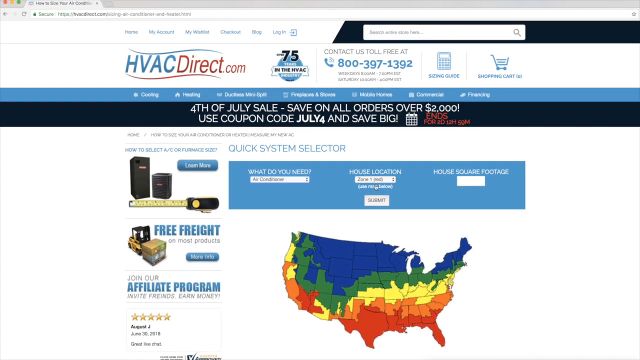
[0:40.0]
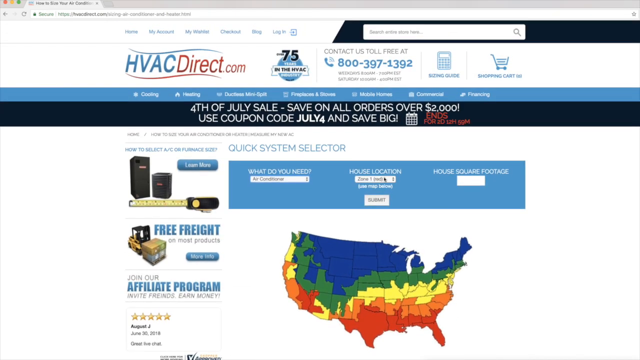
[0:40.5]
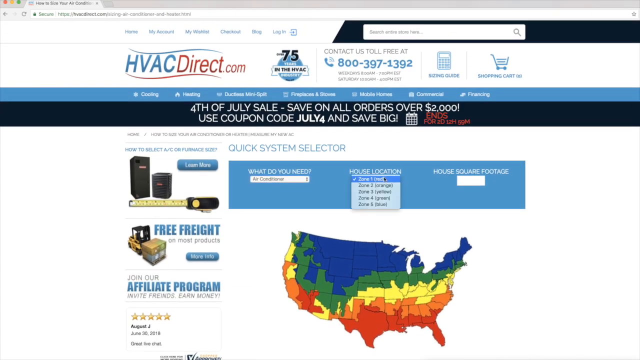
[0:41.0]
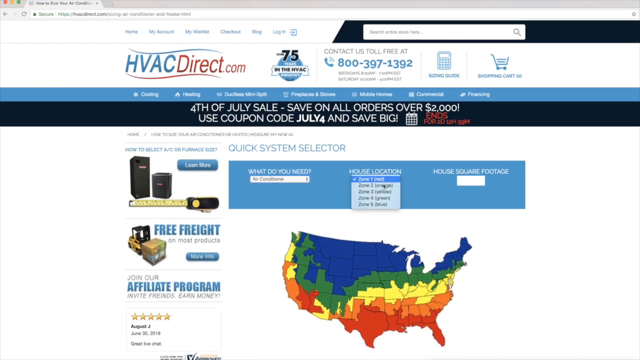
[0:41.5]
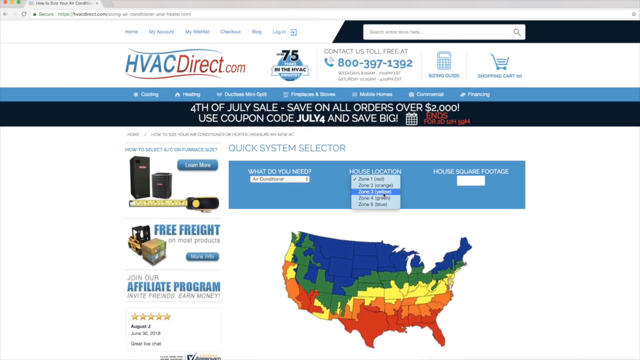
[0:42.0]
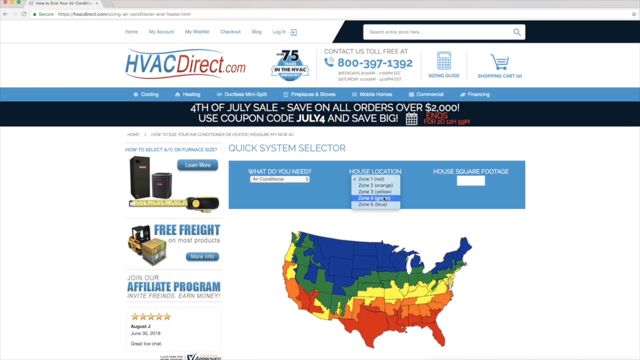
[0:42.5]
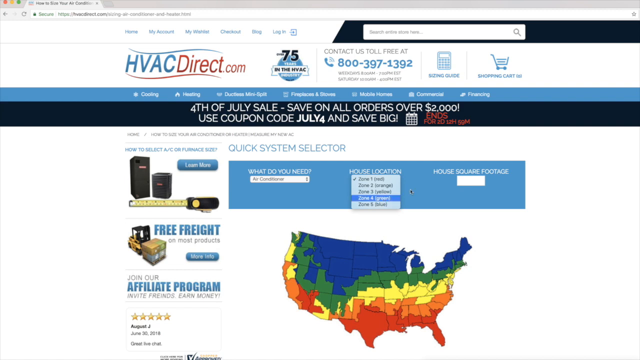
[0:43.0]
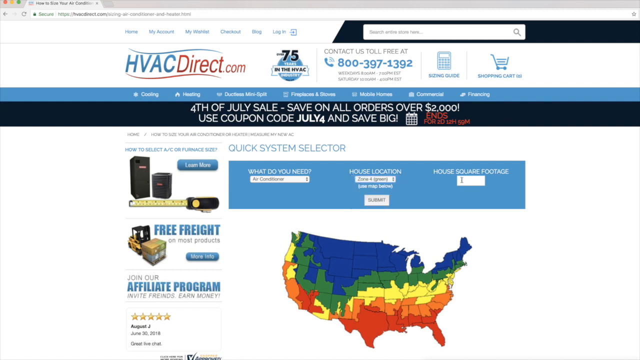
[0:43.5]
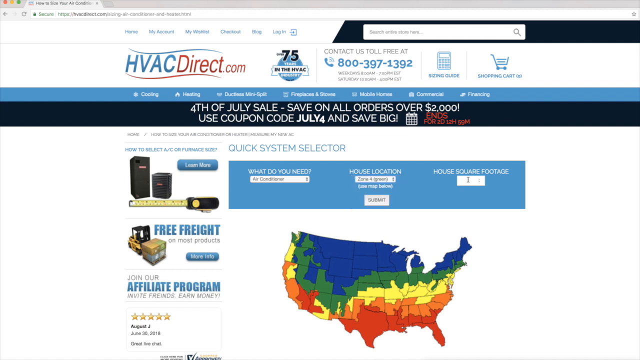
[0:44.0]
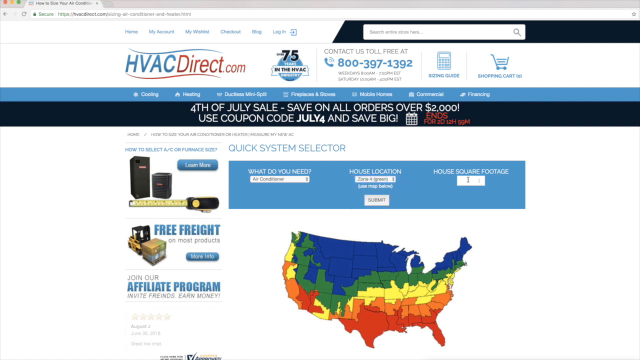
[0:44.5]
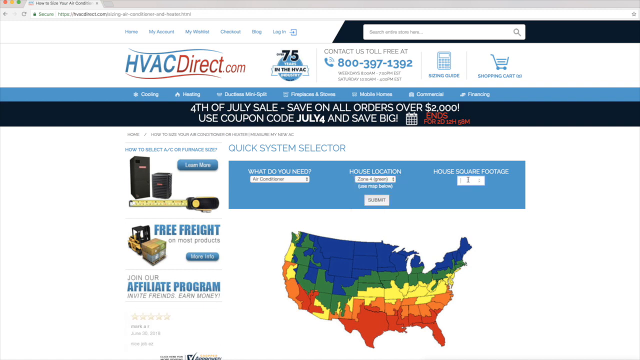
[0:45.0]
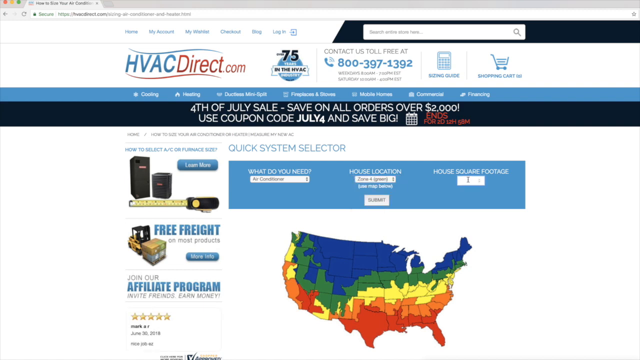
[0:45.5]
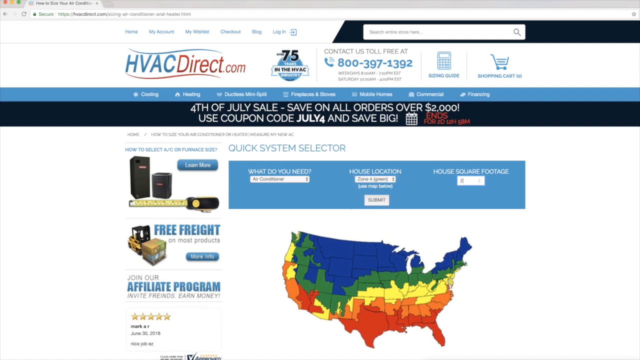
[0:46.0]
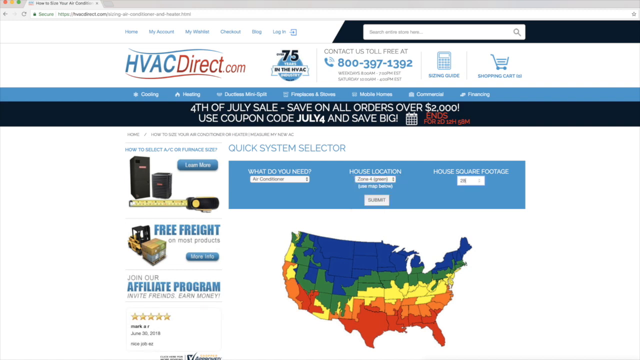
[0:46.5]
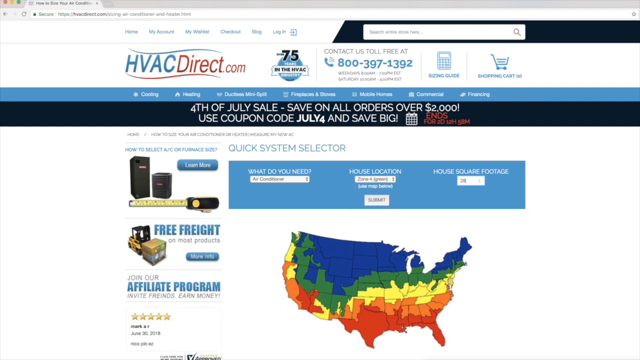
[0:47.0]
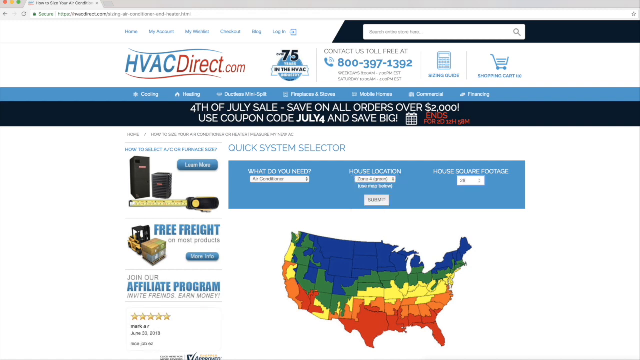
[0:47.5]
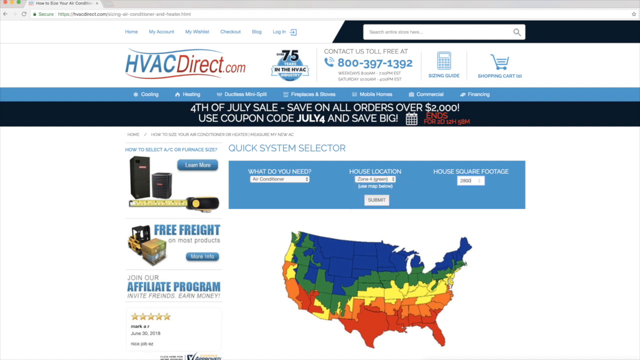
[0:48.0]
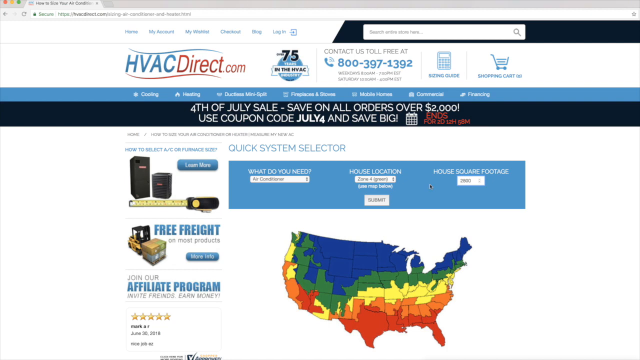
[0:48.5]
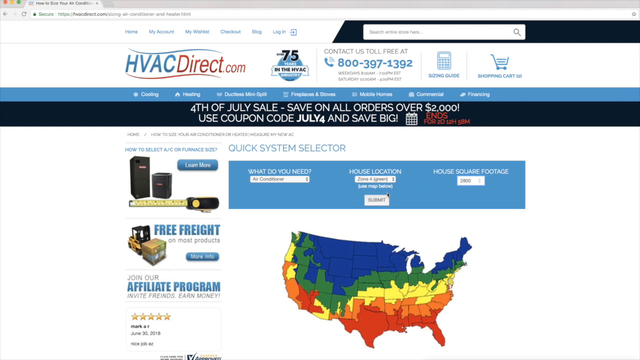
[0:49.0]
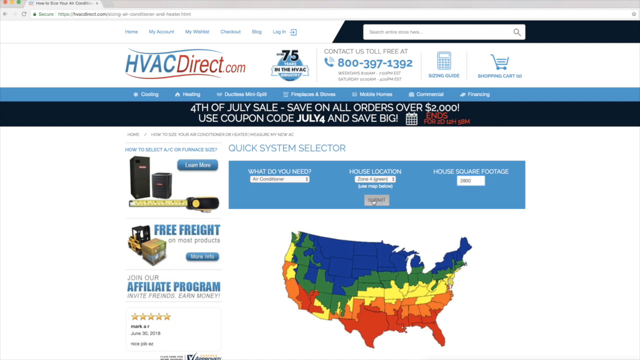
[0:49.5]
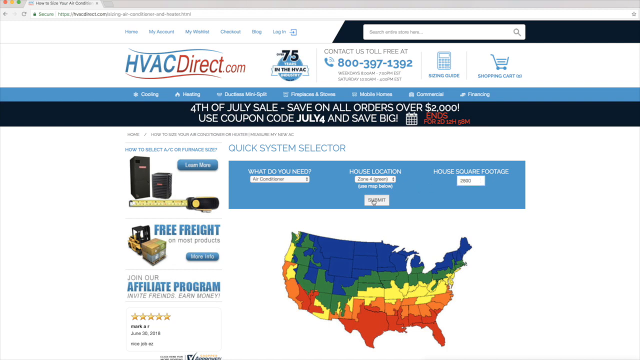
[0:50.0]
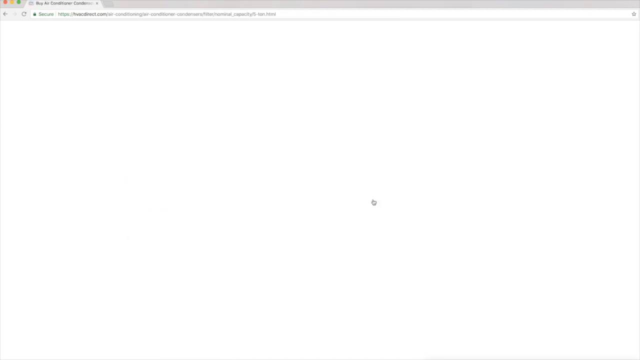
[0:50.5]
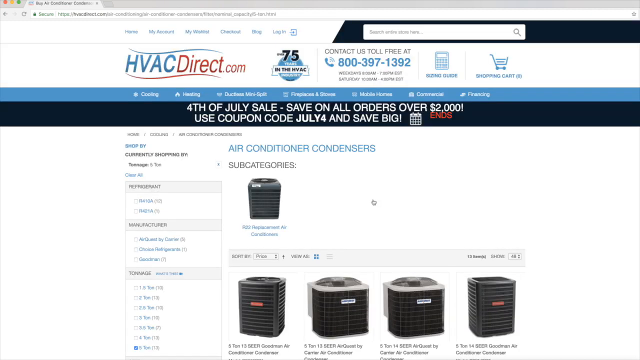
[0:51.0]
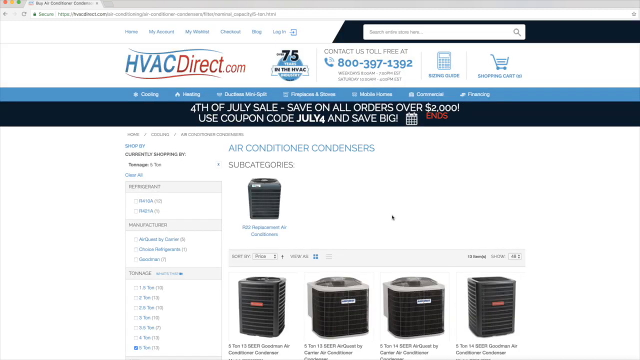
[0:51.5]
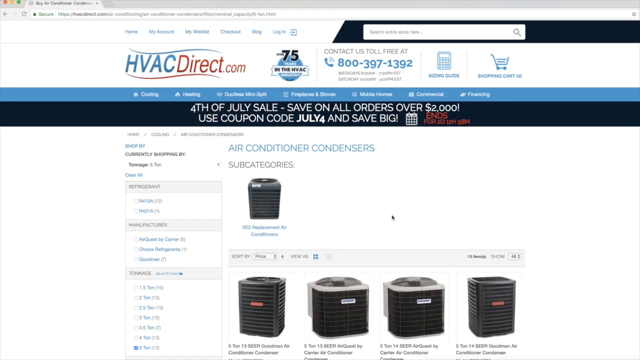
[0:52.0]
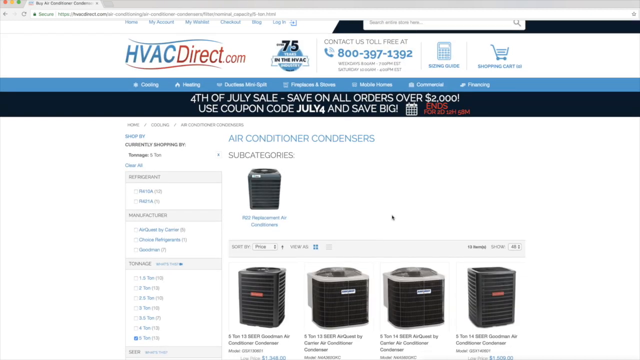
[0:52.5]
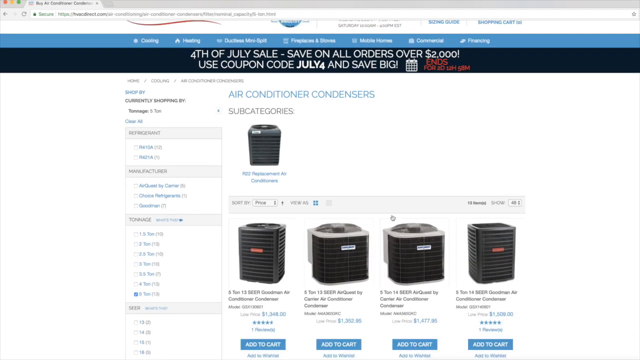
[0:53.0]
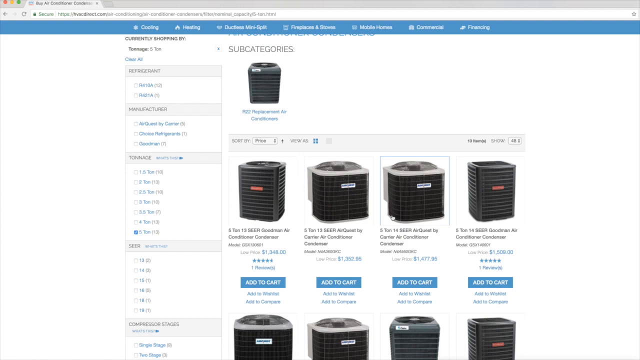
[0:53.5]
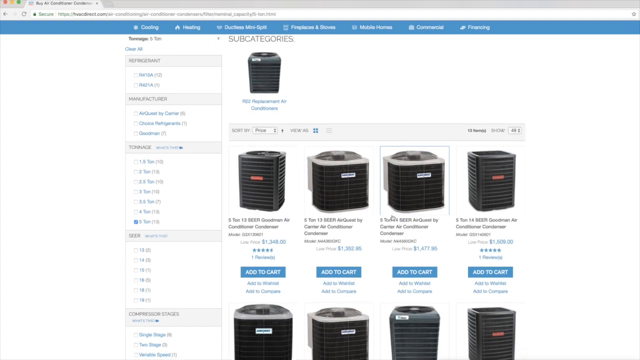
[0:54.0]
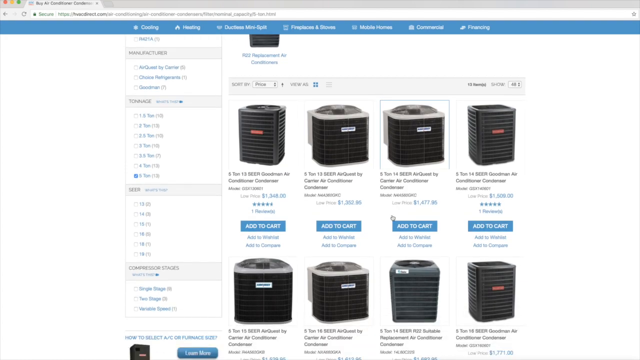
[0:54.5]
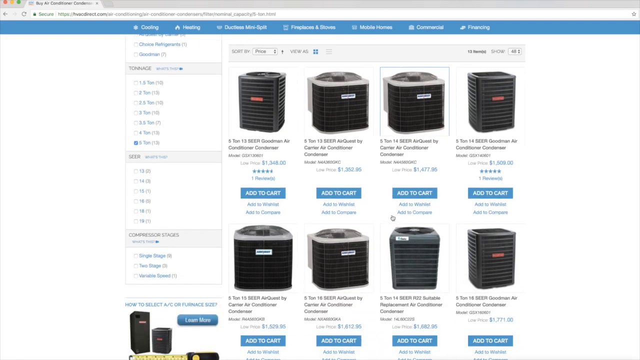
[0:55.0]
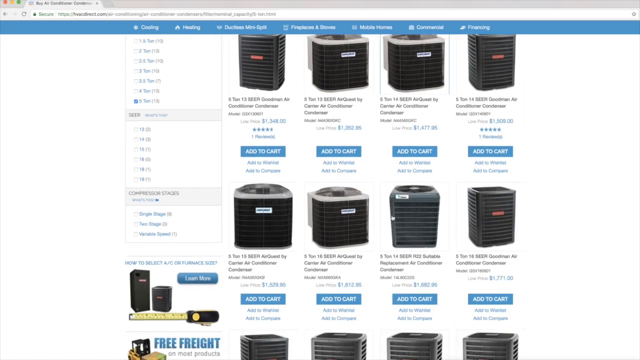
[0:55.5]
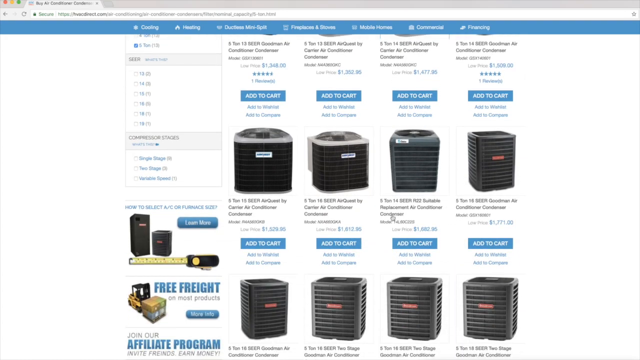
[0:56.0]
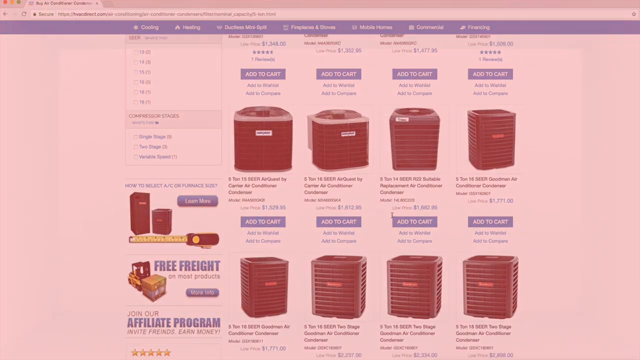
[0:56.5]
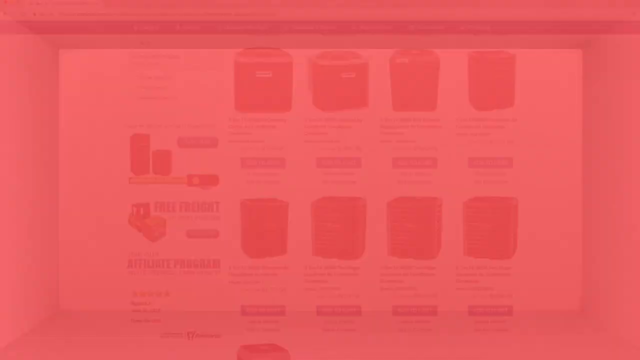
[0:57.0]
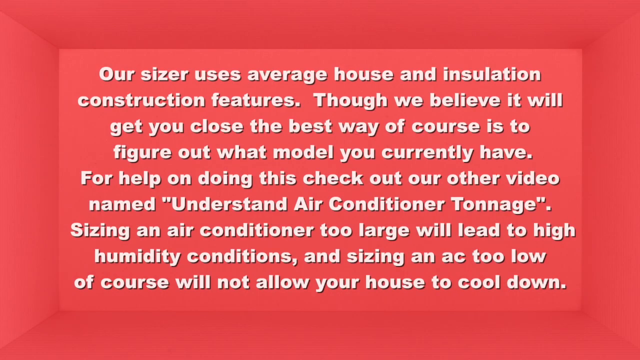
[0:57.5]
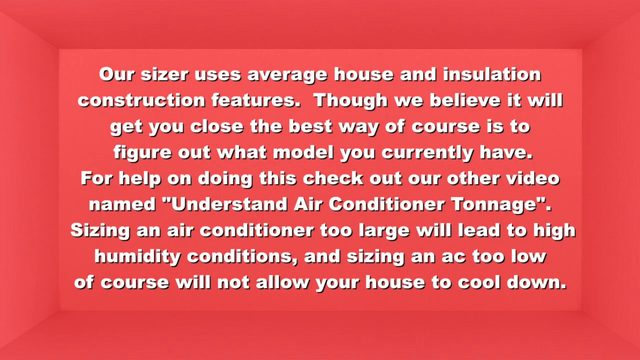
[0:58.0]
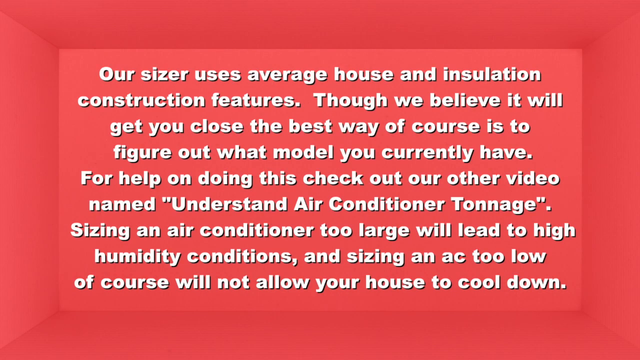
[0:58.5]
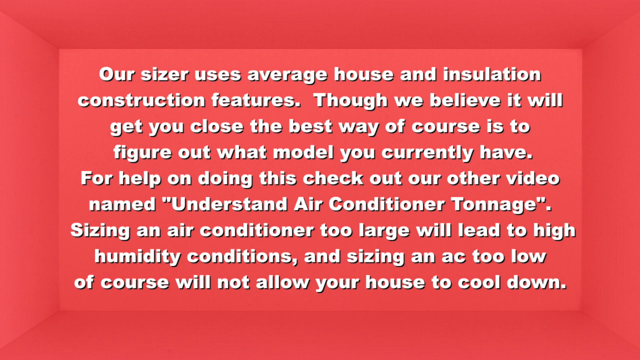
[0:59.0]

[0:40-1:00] The website avadirect.com shows a sales advertisement with discounts, mentioning about 75 countries. Text reads that on the 4th of July it will "save all orders over 2,000" using the coupon code "JULY4" to "save big". A map has a green part marking the areas the organization covers.